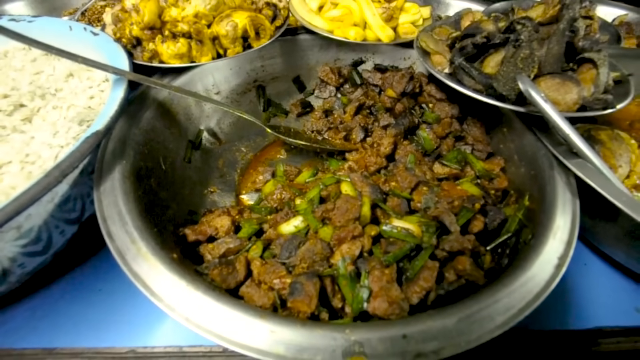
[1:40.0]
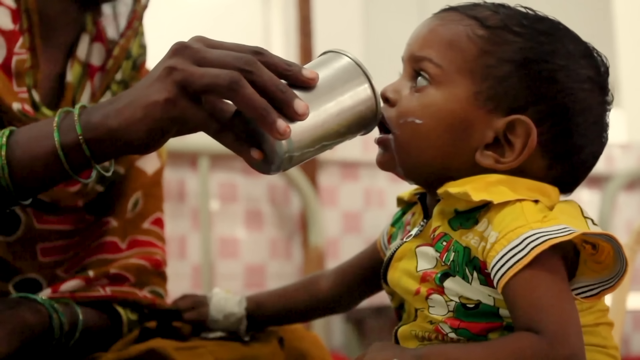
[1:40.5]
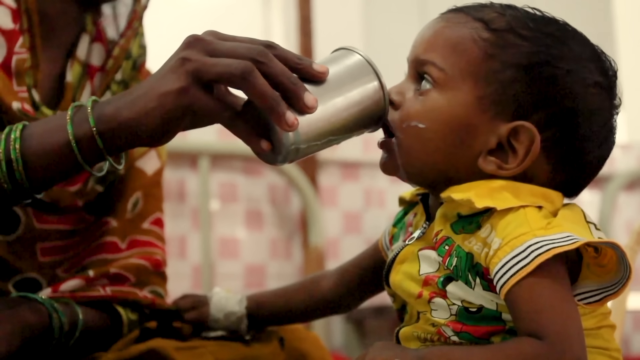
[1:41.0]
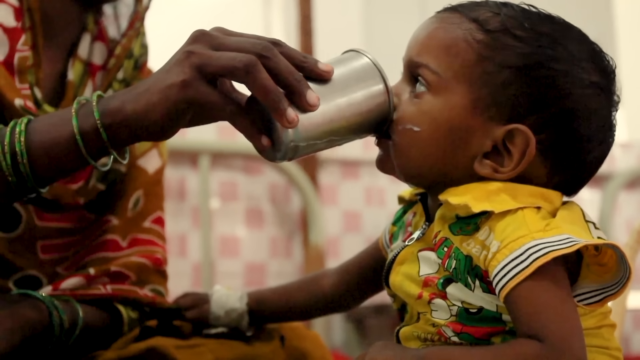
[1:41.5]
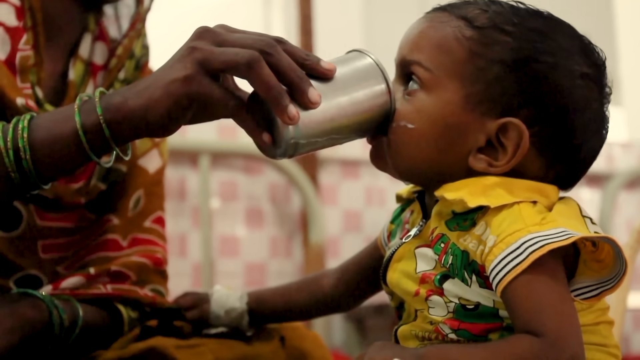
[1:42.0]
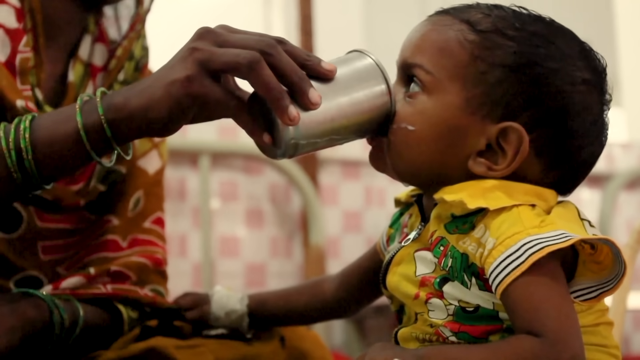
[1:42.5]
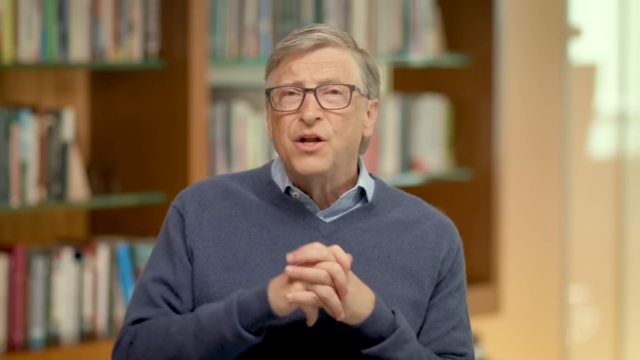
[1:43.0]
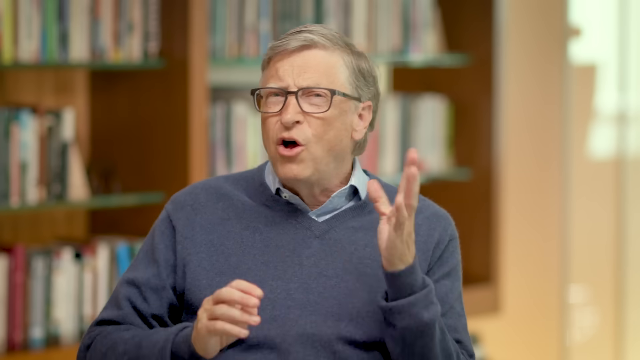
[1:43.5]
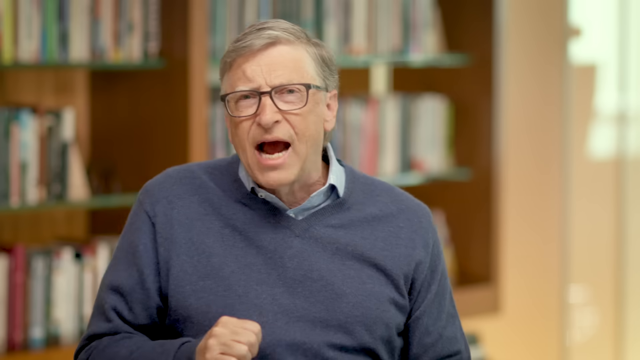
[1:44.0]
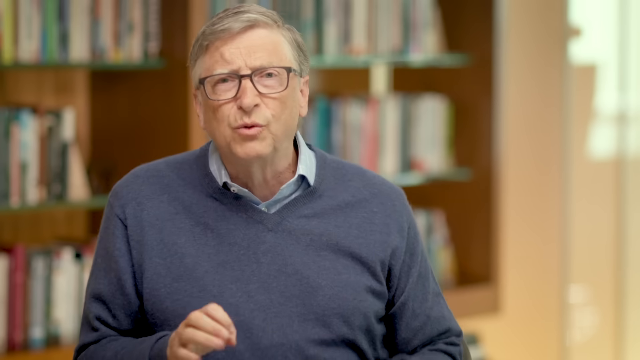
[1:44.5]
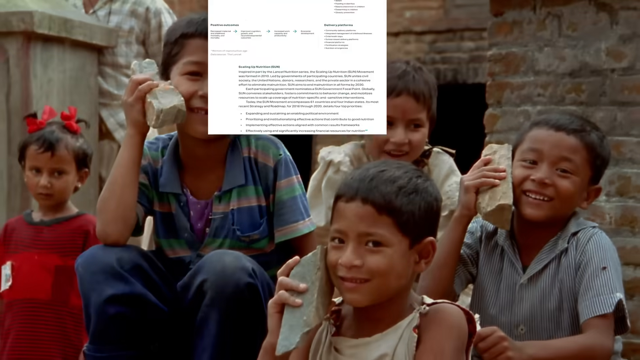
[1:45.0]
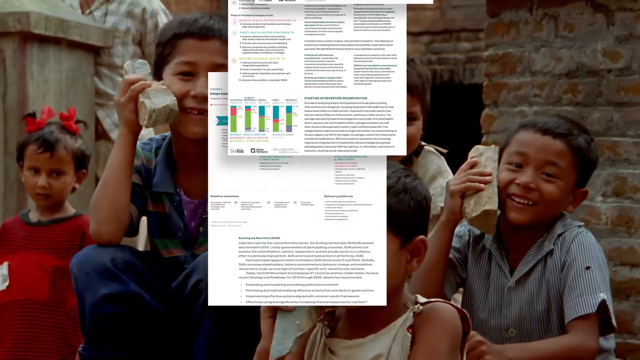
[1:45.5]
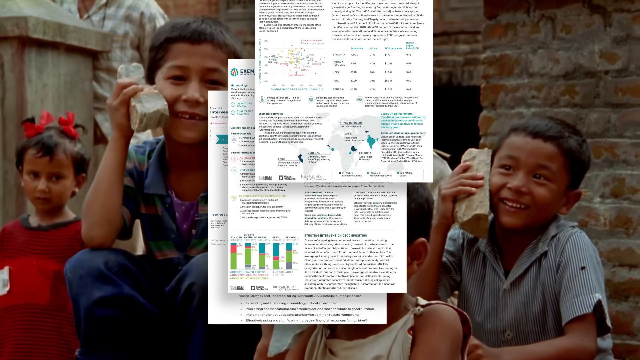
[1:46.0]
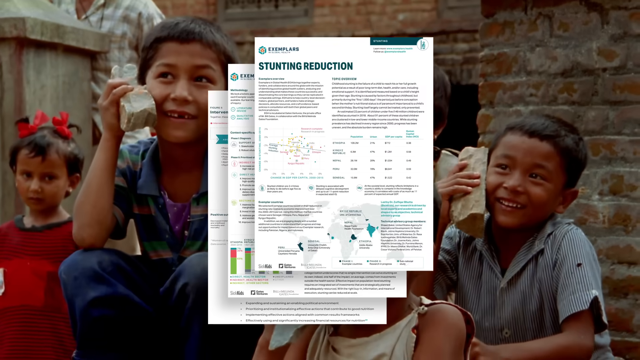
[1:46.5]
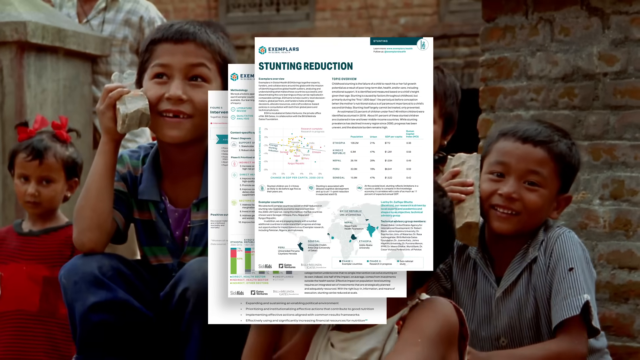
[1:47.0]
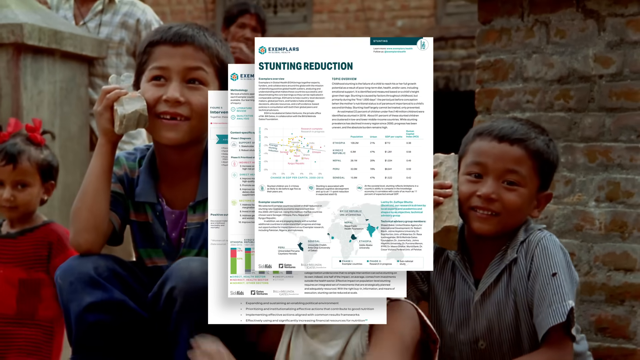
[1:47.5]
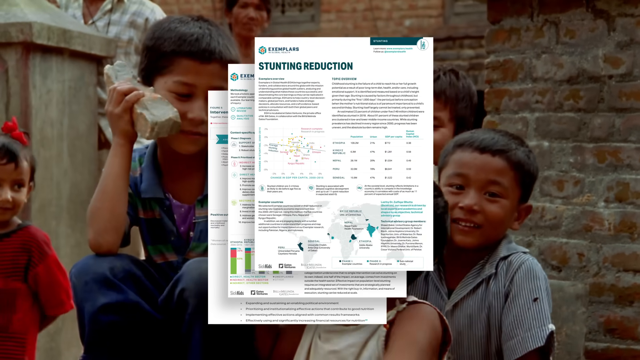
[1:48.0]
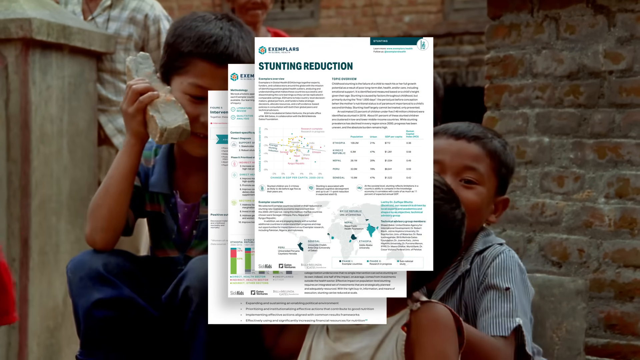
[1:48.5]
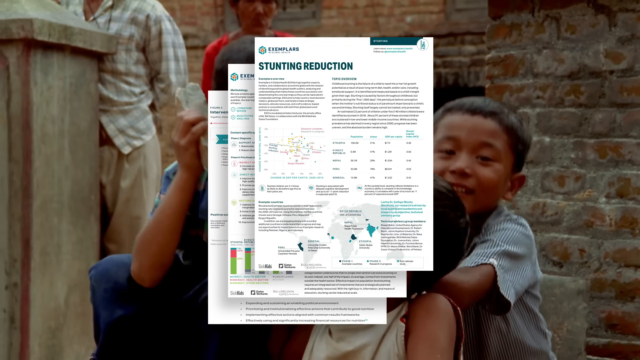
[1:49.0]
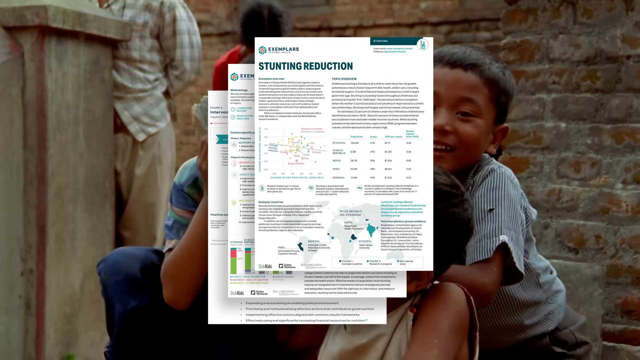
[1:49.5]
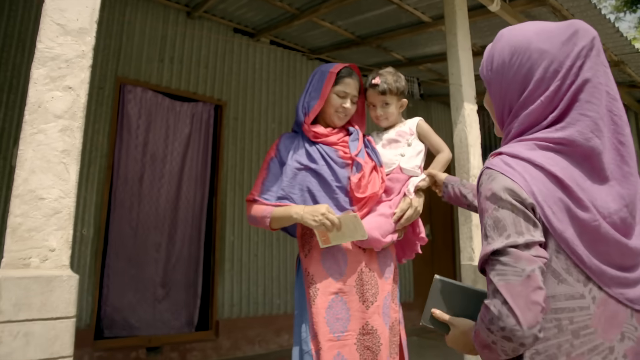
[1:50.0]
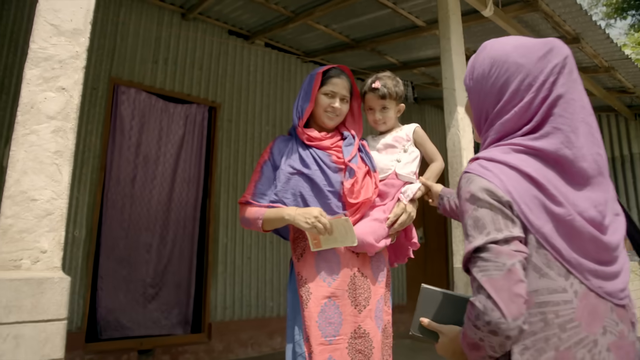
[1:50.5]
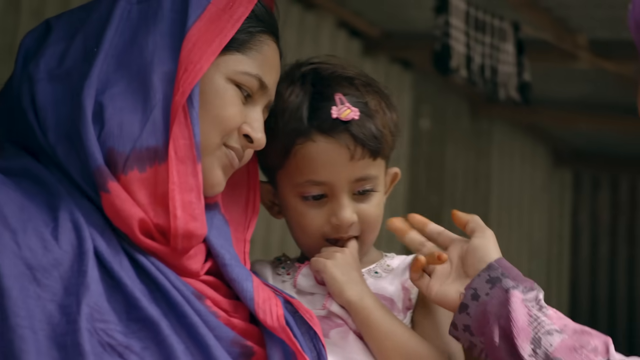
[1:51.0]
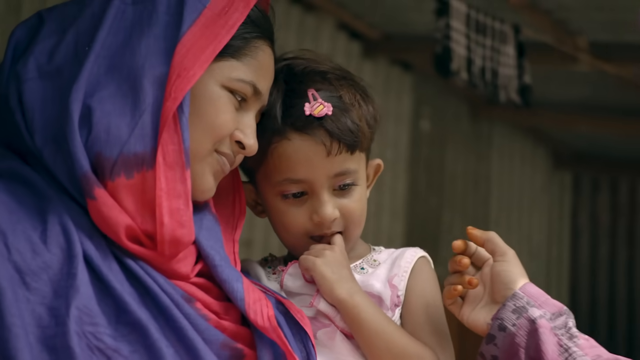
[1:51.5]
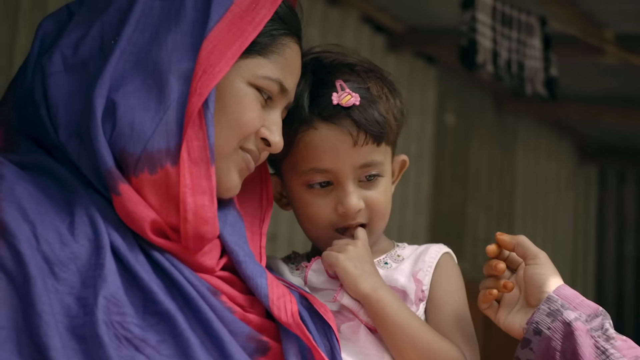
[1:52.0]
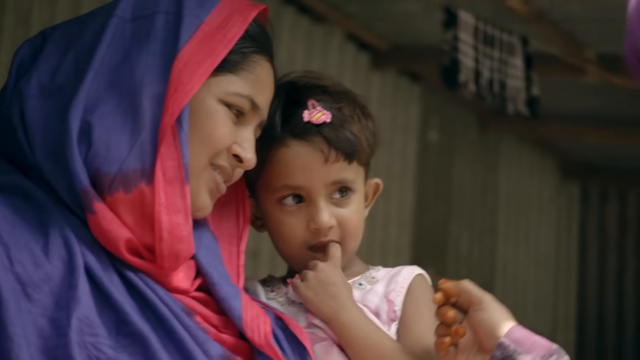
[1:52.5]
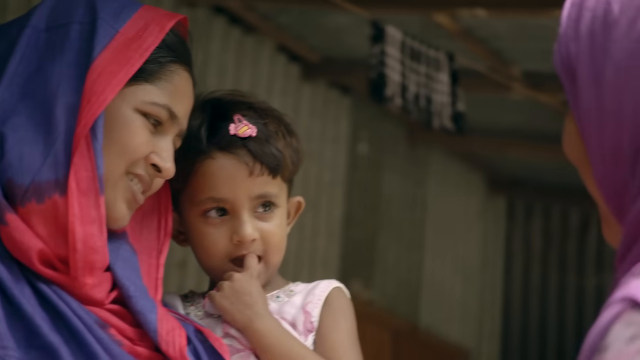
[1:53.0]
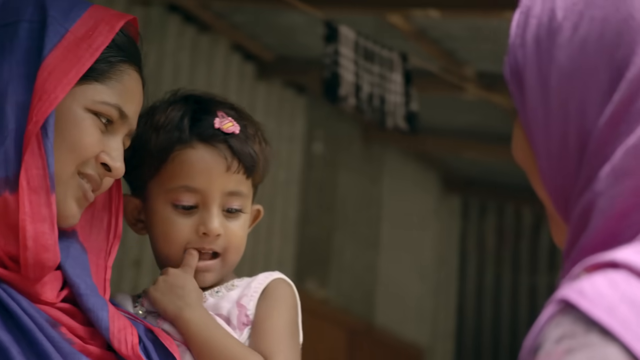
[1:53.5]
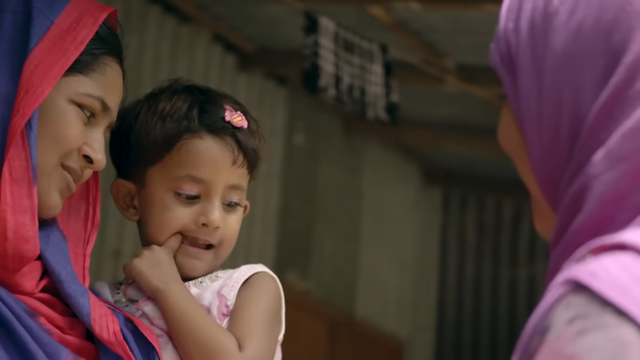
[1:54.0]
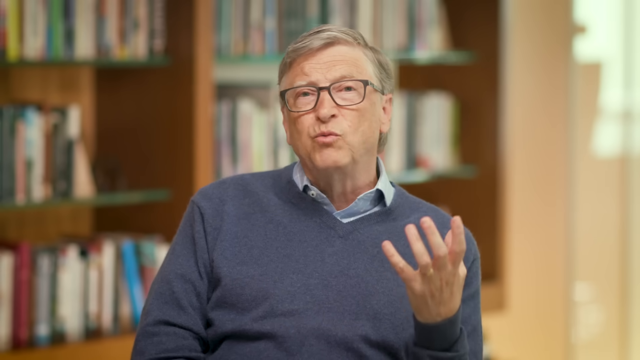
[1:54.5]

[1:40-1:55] An elderly white man sits in a room facing the camera, talking towards it in a presenting style. The scene changes to footage of a person, probably a woman, holding a metal cup up towards a toddler and serving the toddler a drink of what looks like milk. After briefly returning to the presenter, the video shows a group of young children holding rocks up to their ears like mobile phones. This is overlaid with infographics: A4-style sheets with graphs and text about stunting reduction. The scene then pans to a woman in traditional clothes holding a child in her arm, balanced on her hip, as she talks to another woman.